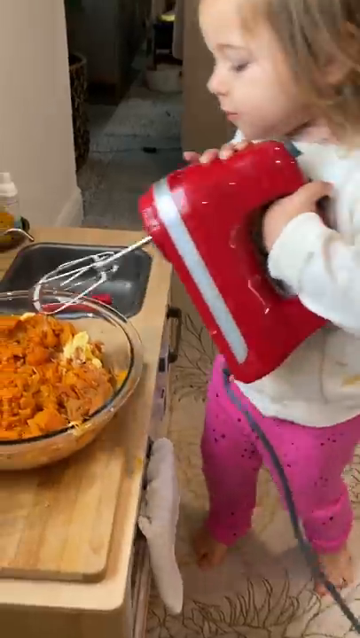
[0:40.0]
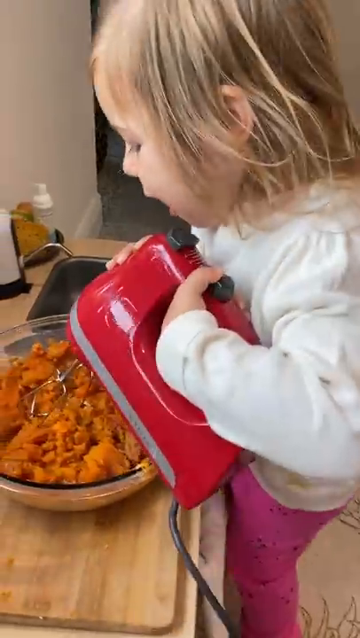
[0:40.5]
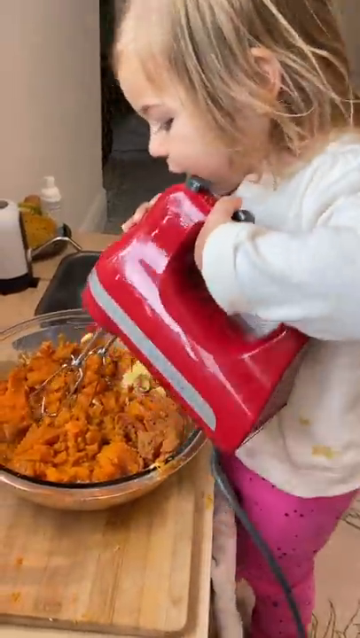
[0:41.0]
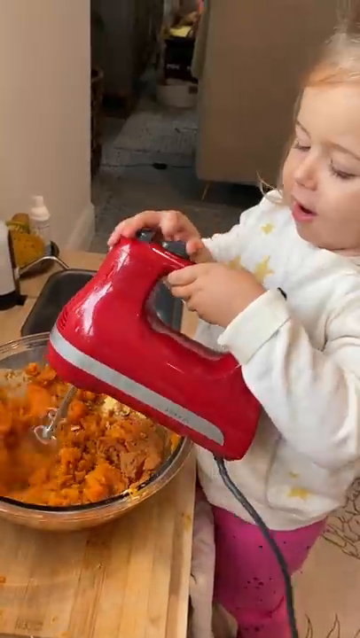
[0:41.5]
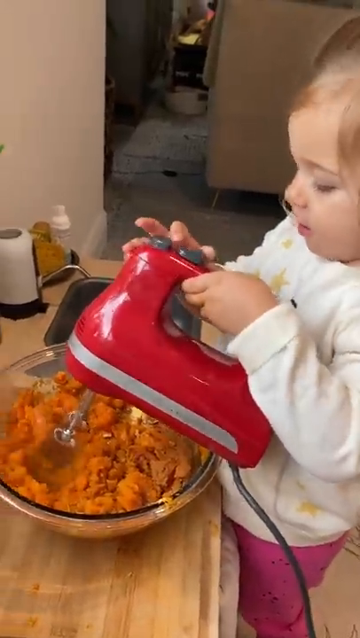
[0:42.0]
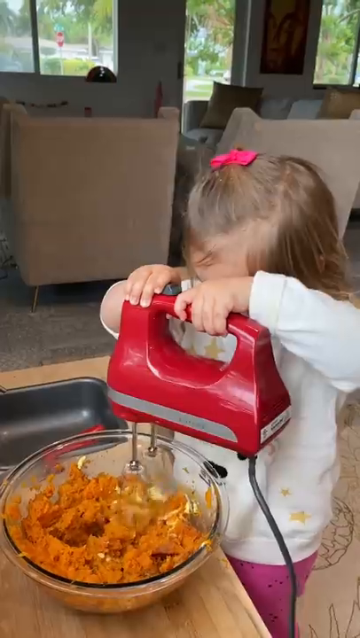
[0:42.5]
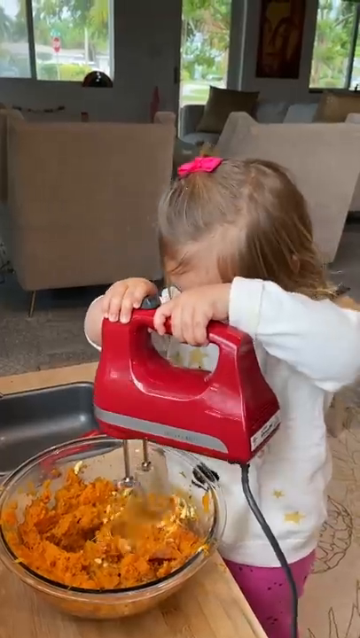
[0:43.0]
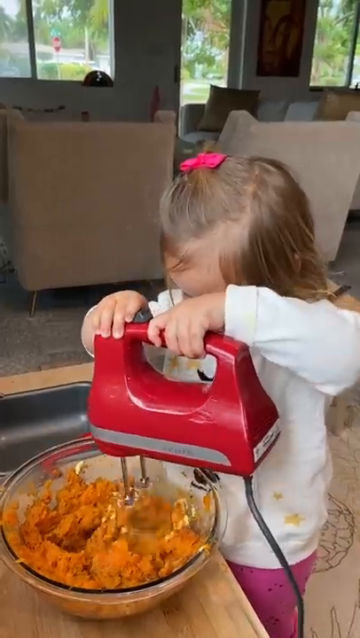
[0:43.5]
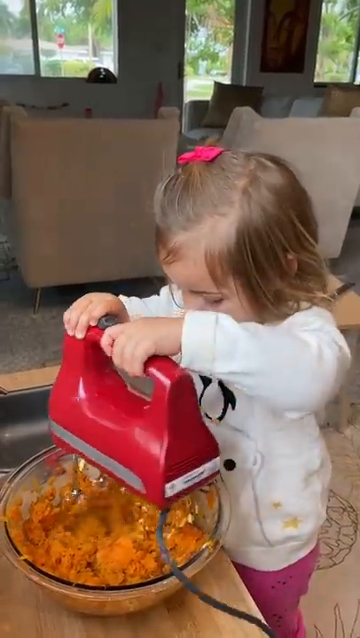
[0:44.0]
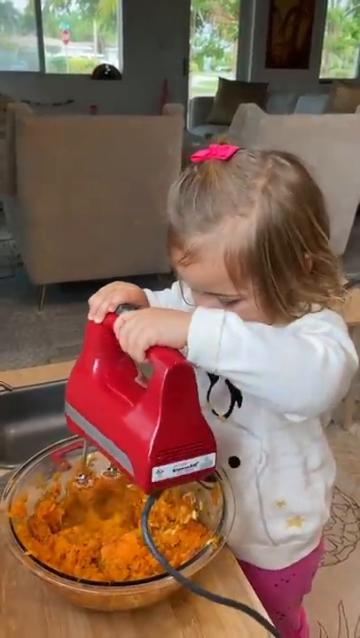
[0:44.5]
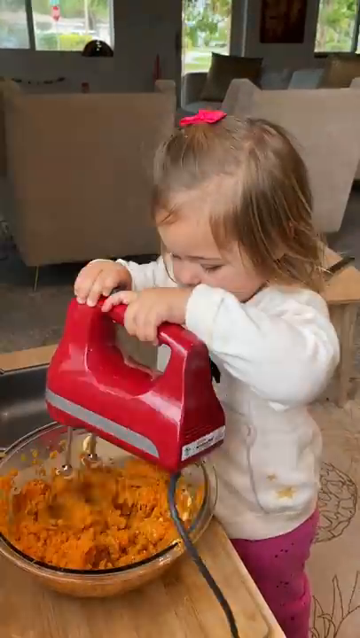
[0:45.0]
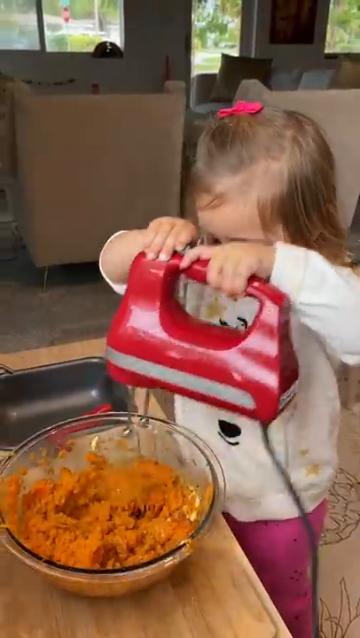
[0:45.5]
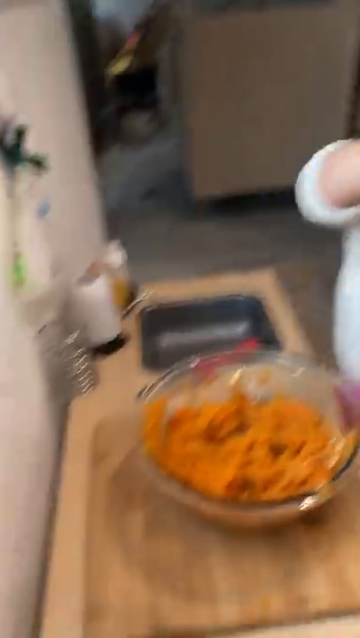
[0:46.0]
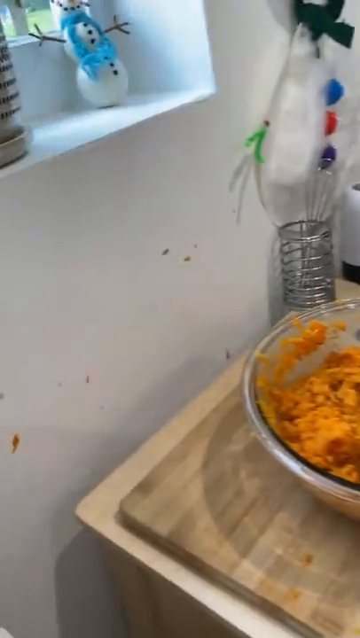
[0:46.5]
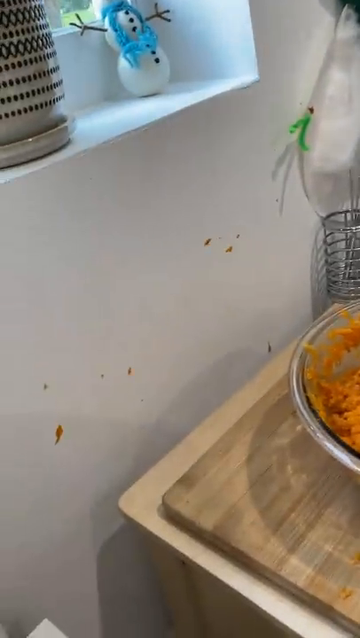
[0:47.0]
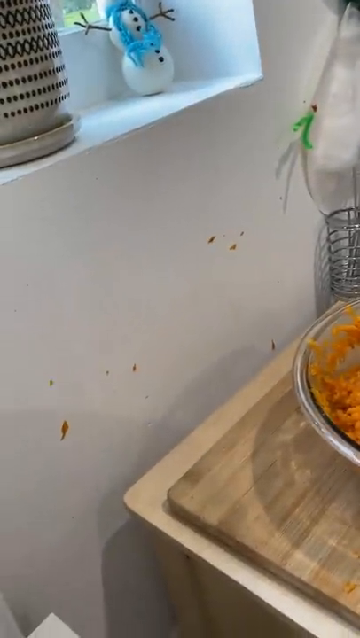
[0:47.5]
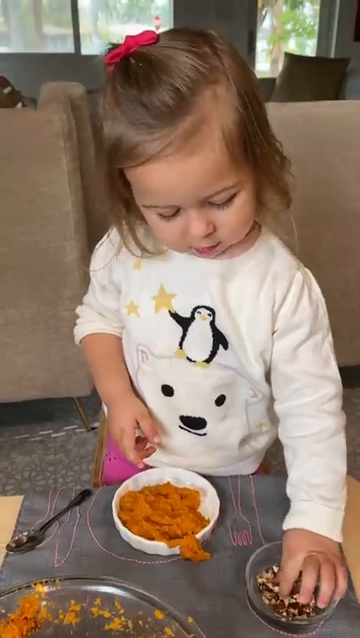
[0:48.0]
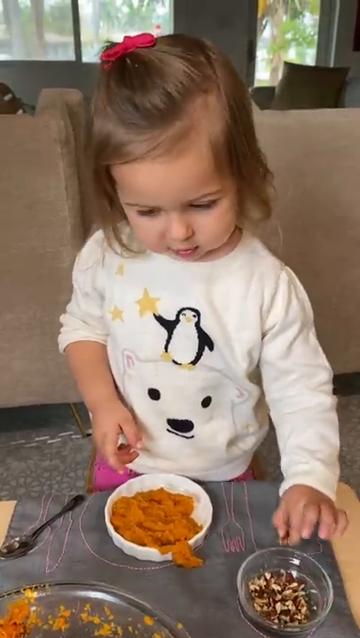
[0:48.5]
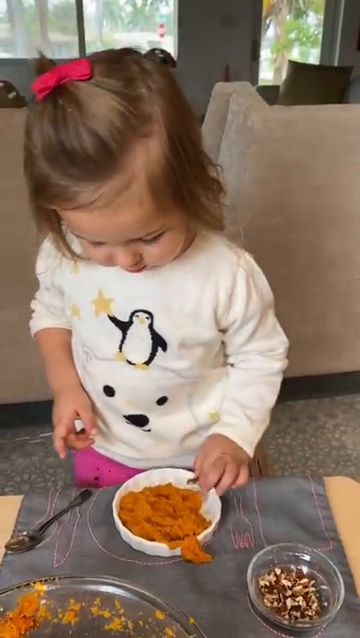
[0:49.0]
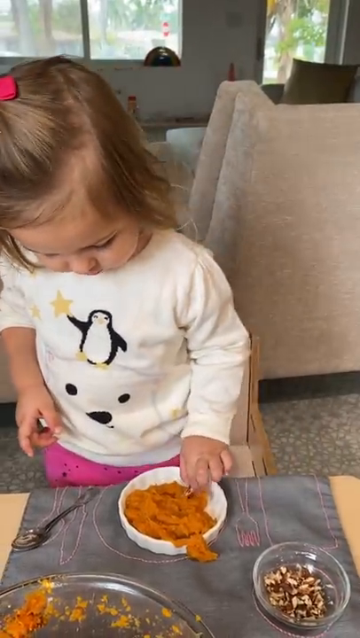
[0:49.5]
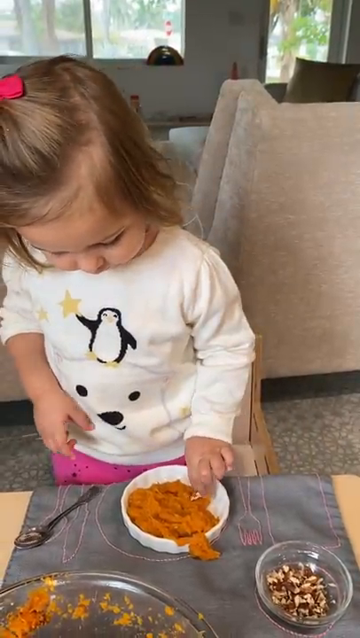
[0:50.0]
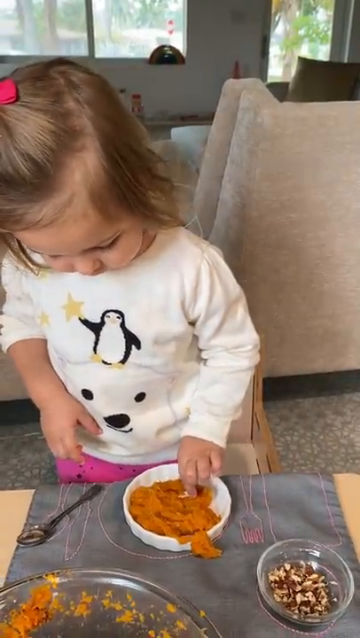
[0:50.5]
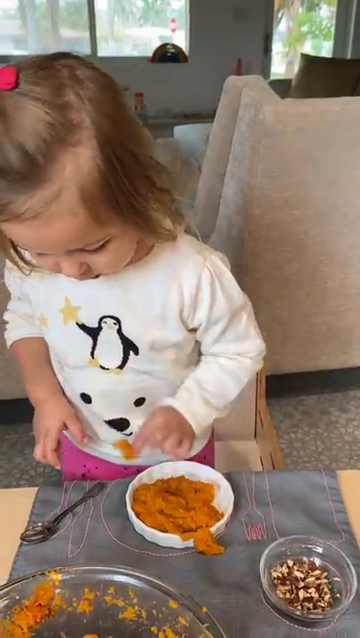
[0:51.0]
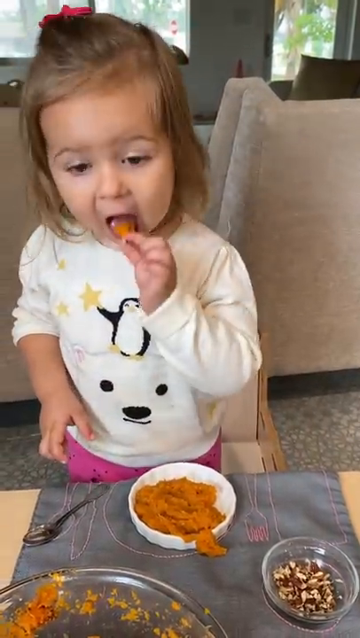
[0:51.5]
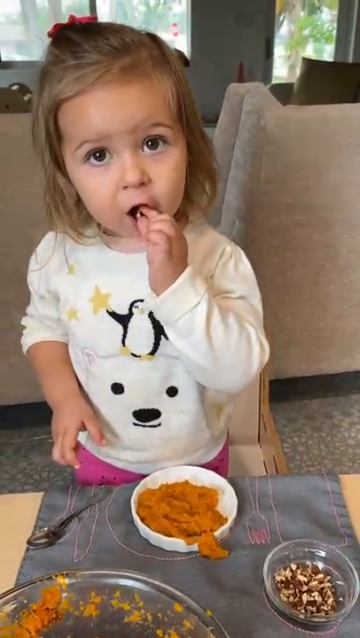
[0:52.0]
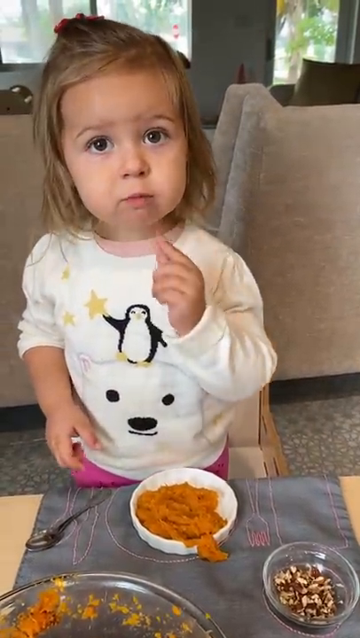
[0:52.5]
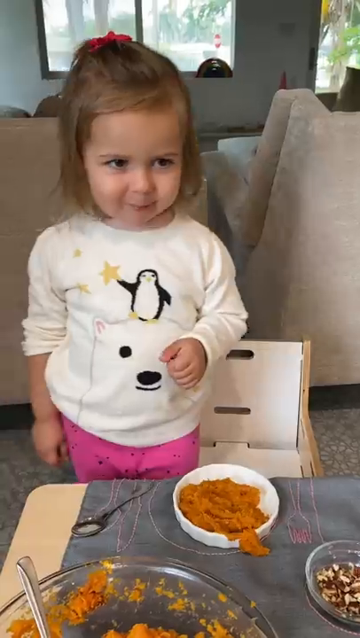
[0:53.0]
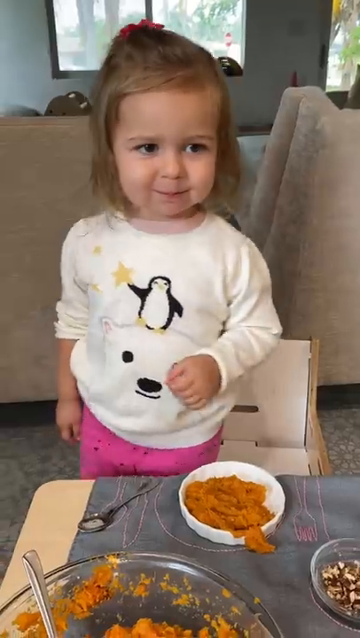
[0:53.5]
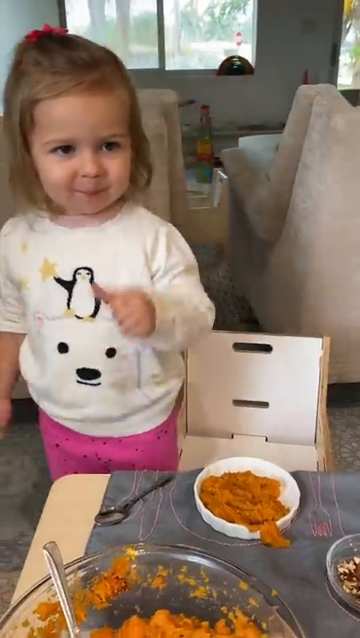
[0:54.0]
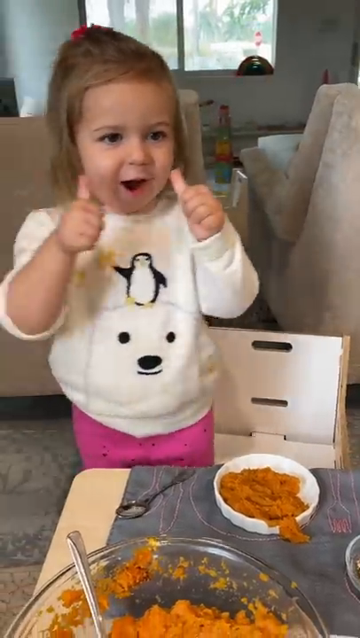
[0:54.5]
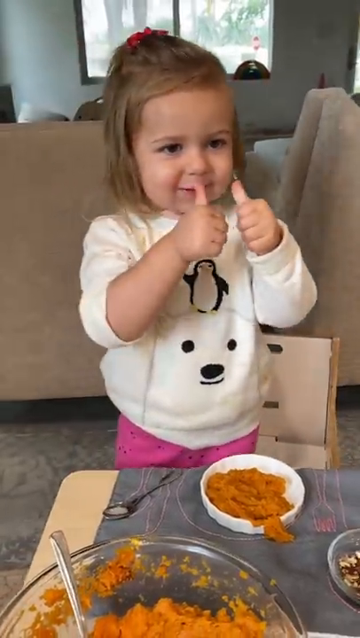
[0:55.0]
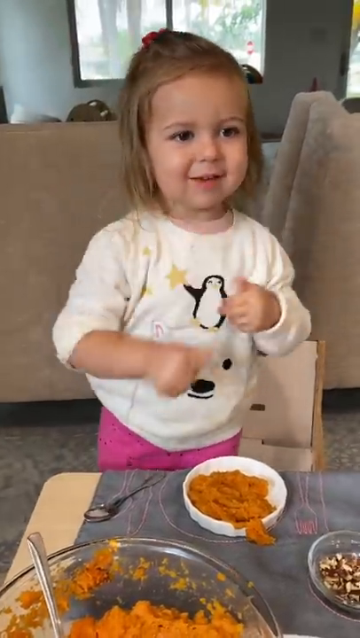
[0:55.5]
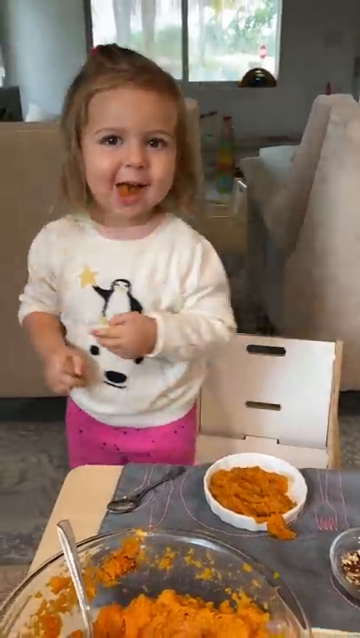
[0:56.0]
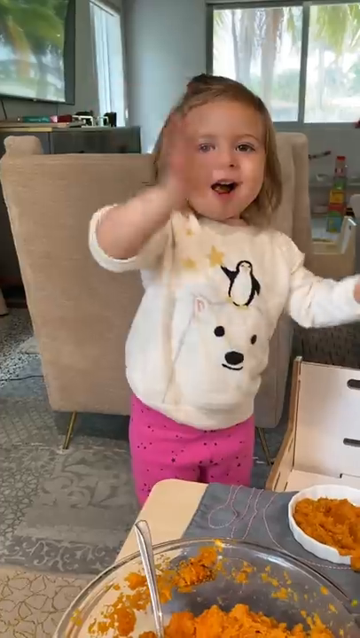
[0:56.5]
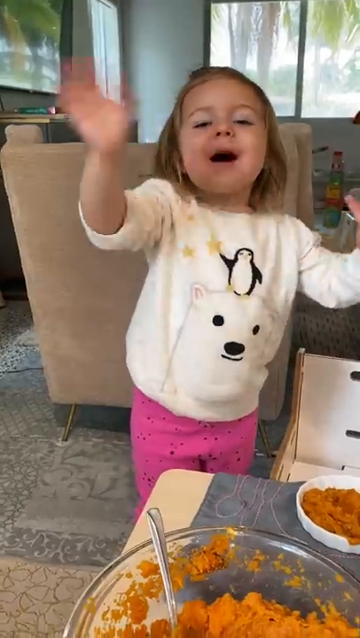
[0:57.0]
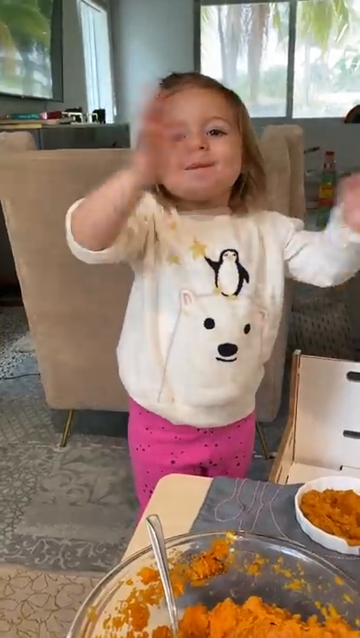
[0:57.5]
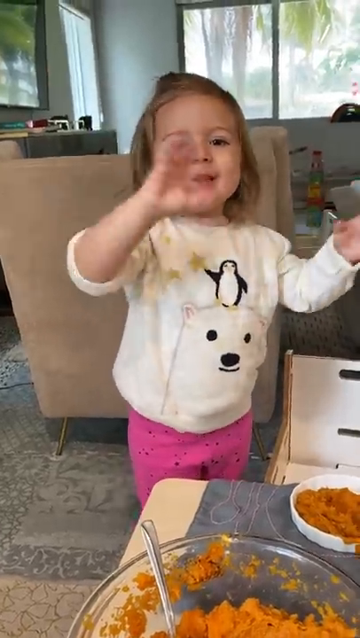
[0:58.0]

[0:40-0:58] The girl has the red plastic hand mixer going and mixes the sweet potatoes and all the ingredients together, working on a little gray placemat. The mixer splatters the mixture, getting a little bit on the wall, and she seems unaware of it. She has trouble holding the mixer, which is a little big for her. She appears to put a nut into the mixture; apparently from a bowl of nuts, she scoops out some of the sweet potato mixture and eats it like a chip with dip. She tastes it, gives two thumbs up like it's delicious, and waves goodbye. She seems pretty pleased with herself.